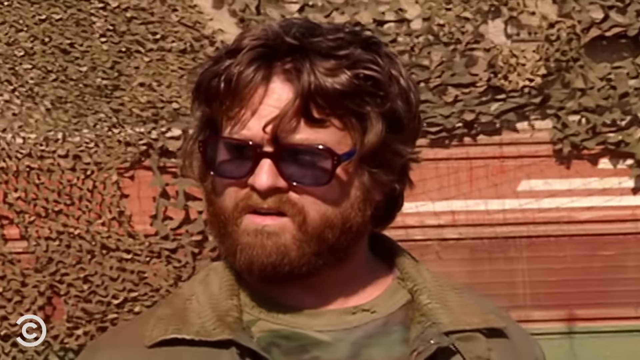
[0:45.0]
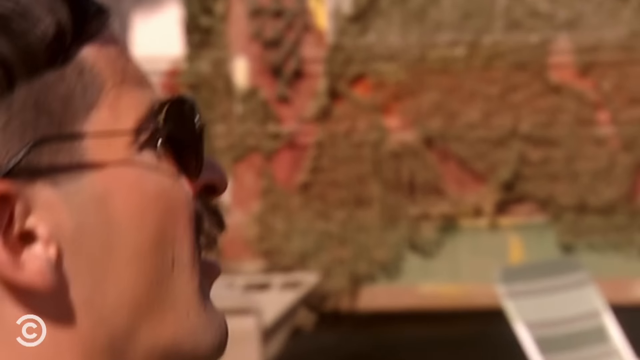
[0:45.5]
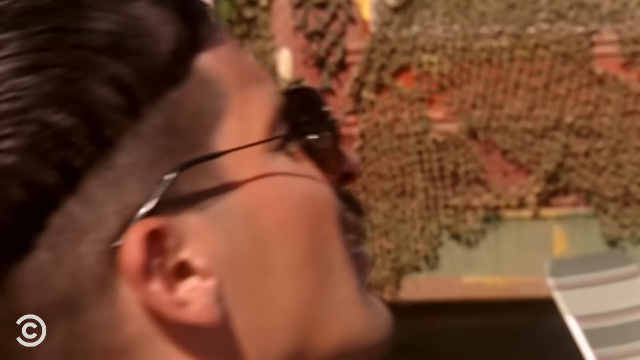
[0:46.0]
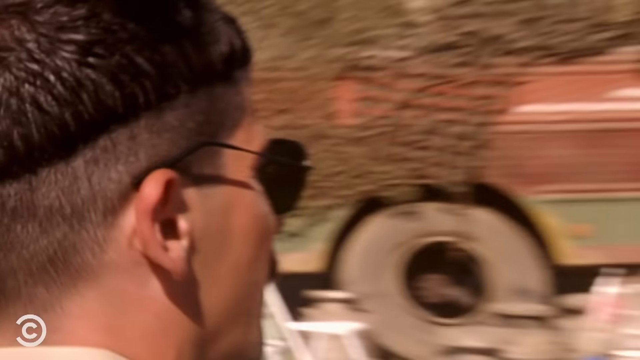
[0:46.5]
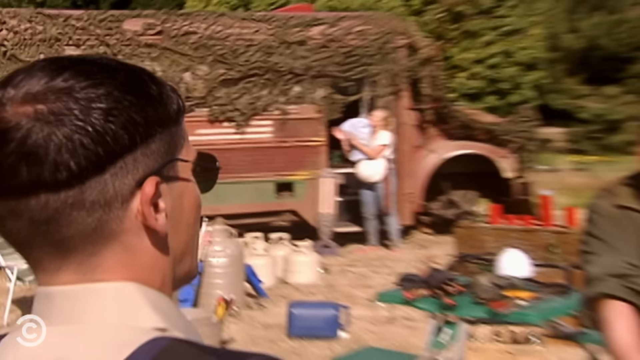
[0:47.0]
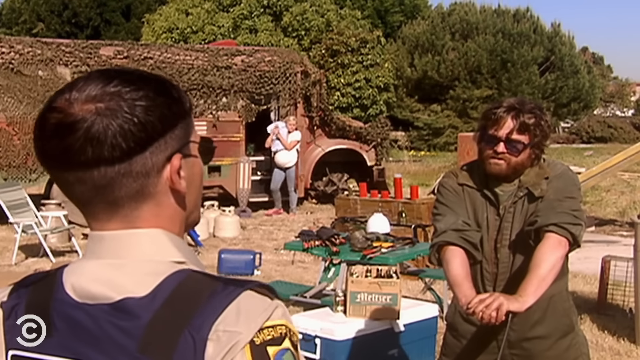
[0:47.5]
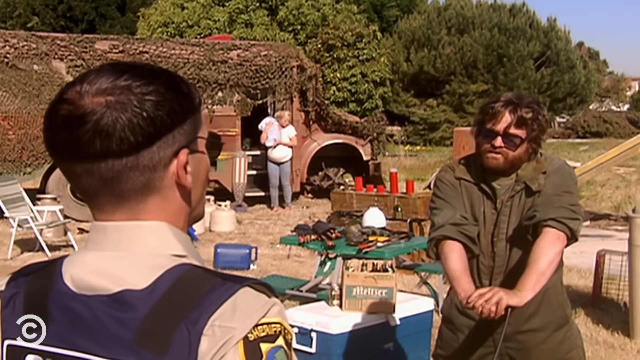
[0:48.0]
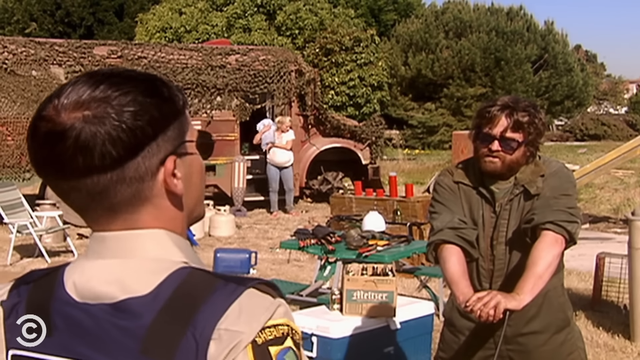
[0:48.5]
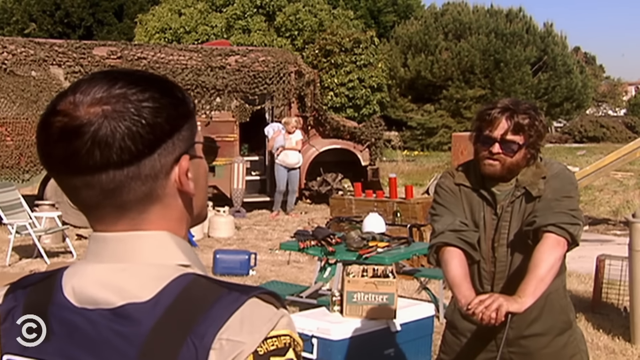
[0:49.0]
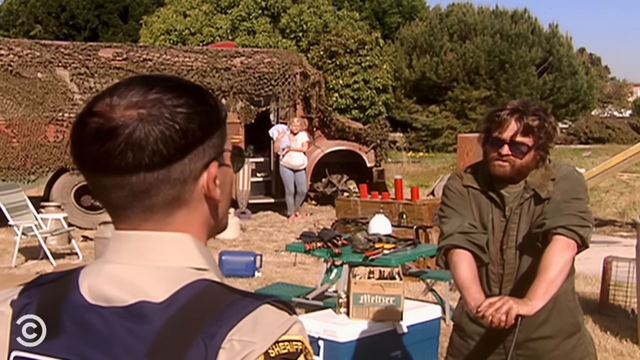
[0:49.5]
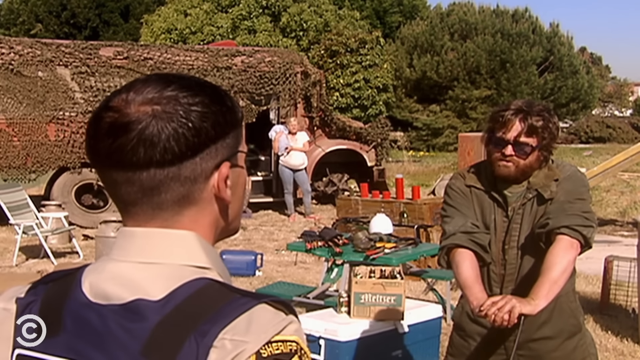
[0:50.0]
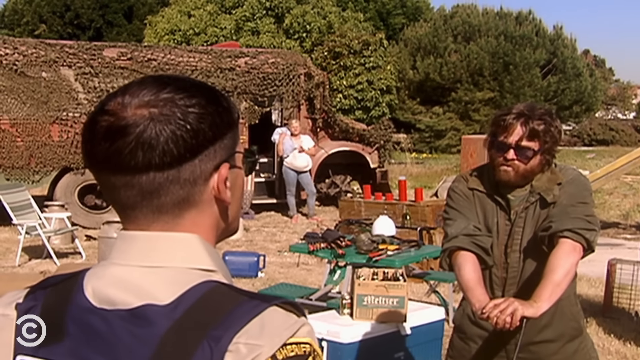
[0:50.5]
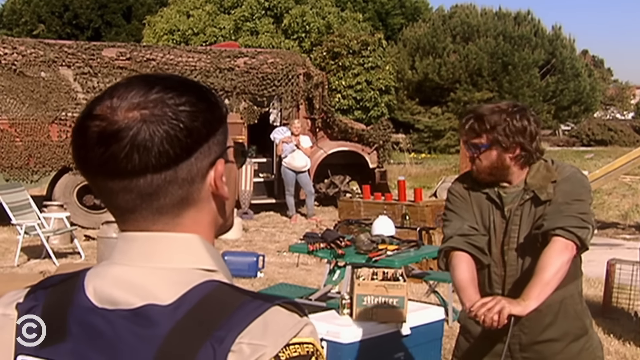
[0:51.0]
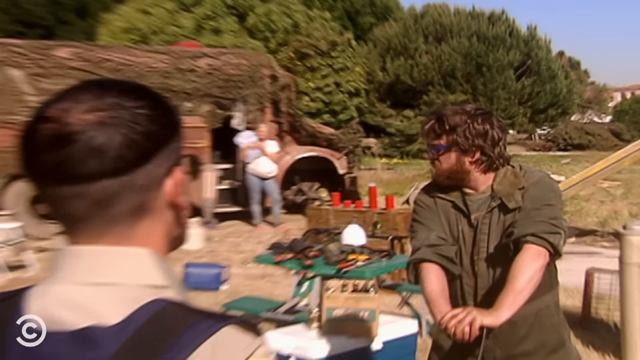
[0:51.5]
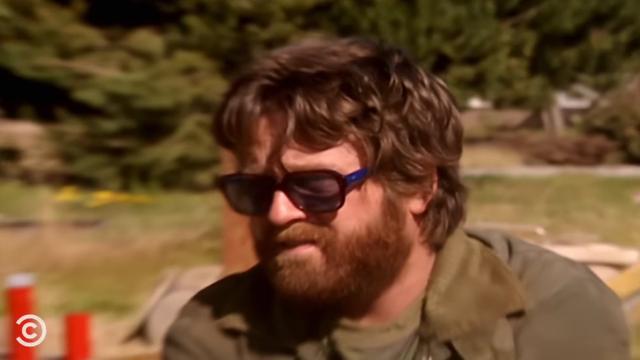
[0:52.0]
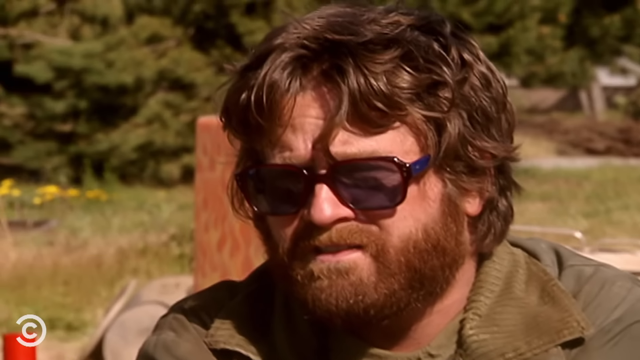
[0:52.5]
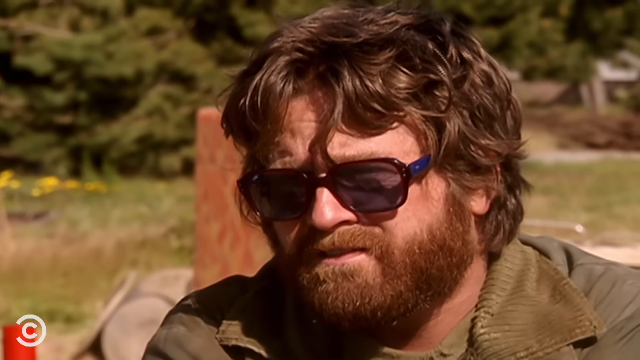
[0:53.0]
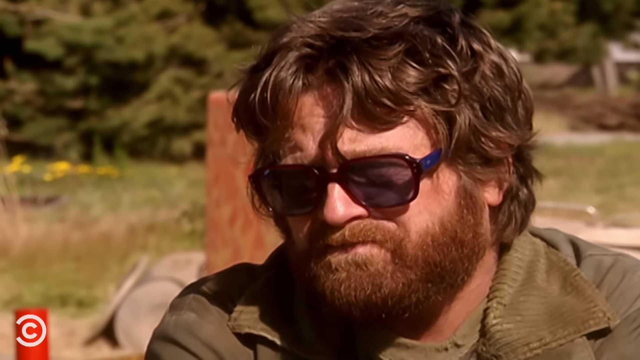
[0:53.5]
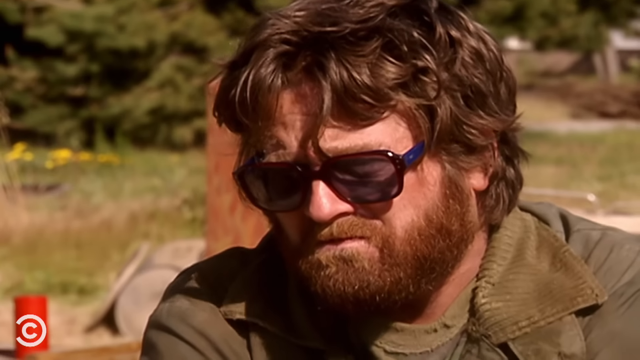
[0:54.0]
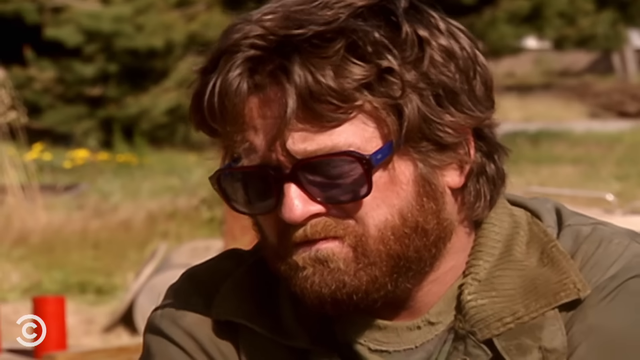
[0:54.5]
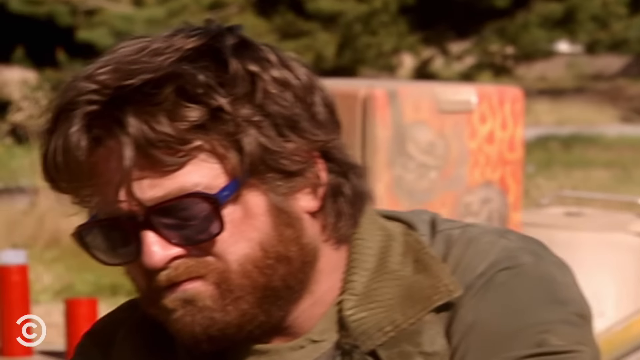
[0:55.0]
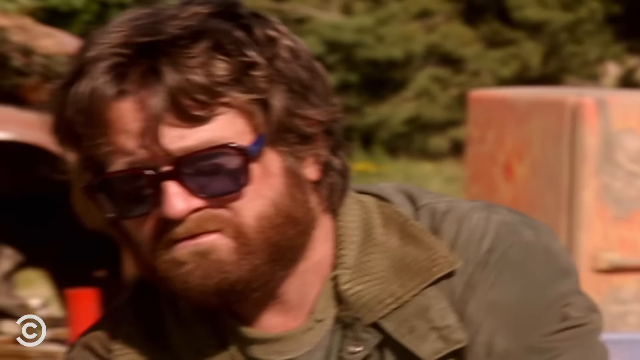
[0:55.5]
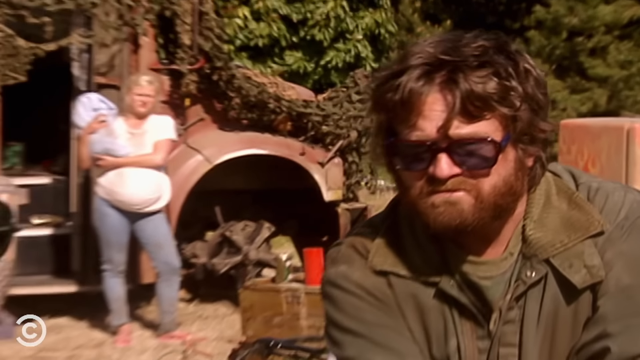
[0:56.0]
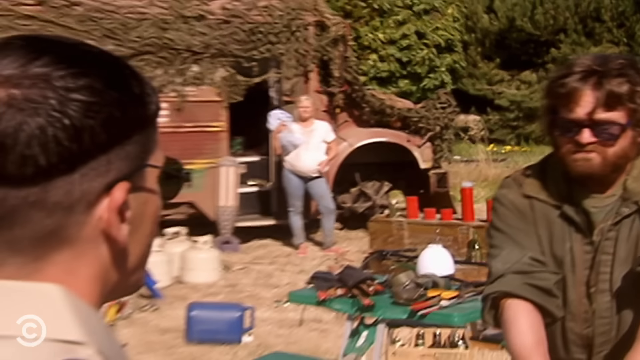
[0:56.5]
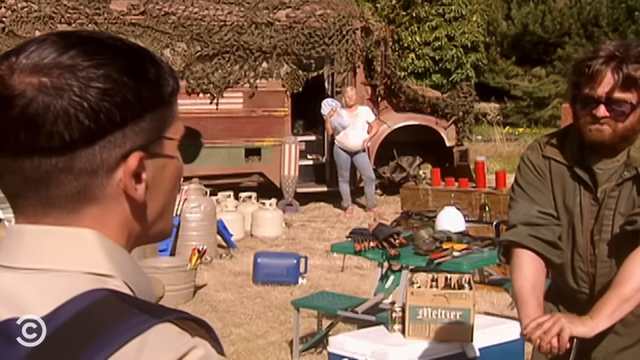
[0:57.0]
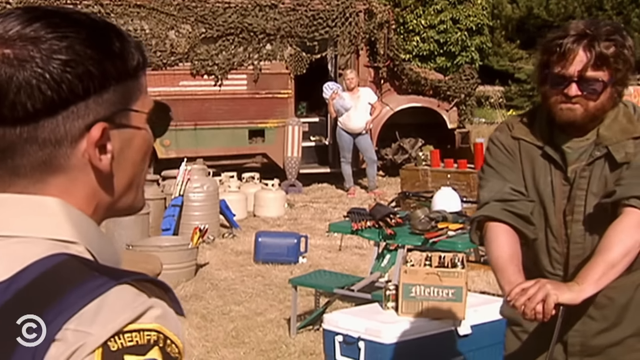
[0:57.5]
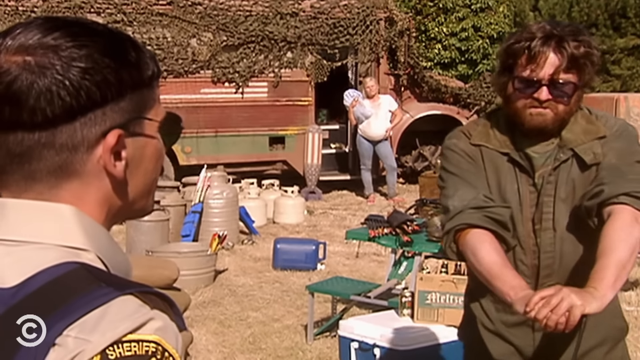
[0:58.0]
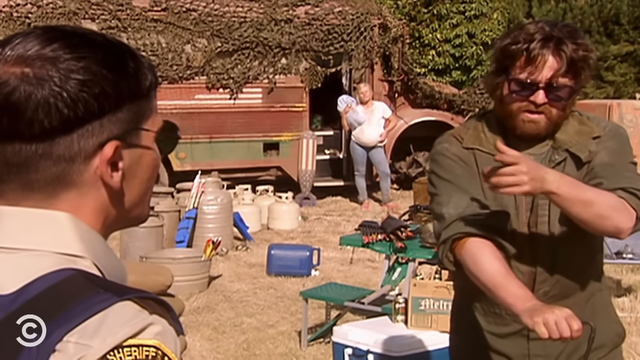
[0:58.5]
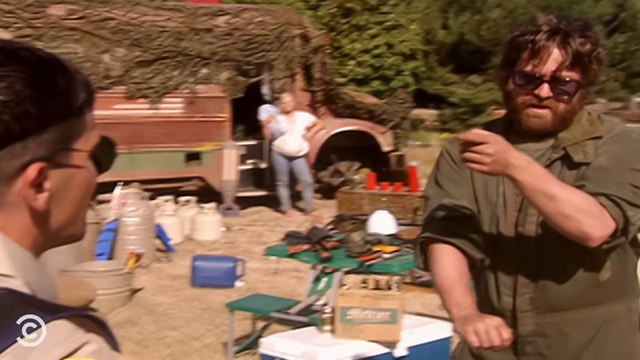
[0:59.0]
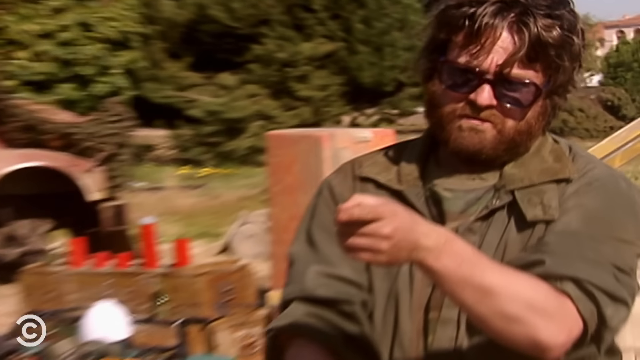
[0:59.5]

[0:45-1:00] A close-up shows the cop with the blue sheriff vest talking with the guy in the jumpsuit. This cop has sort of almost a bowl cut that is shorter underneath, a very strange haircut, and wears black sunglasses as he looks at the guy and talks. The shot is sort of from behind the cop, showing his back, shoulders and the back of his head, with the guy in the jumpsuit visible from the waist up. The guy leans on something like a cane as he looks at the cop, still wearing his sunglasses. The shot zooms into the guy as he points his pointer finger at the cop. In the background, the mother of the children, who appears to be pregnant, is still standing at the bus by its door, holding a baby and watching the conversation. The guy appears to look back at her, then spits on the ground.